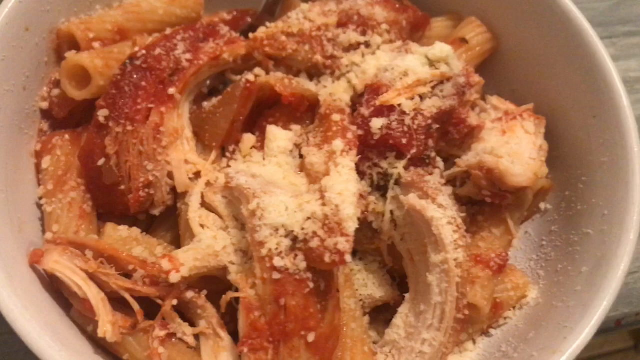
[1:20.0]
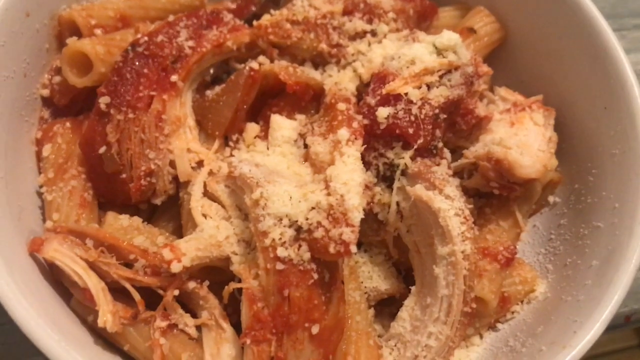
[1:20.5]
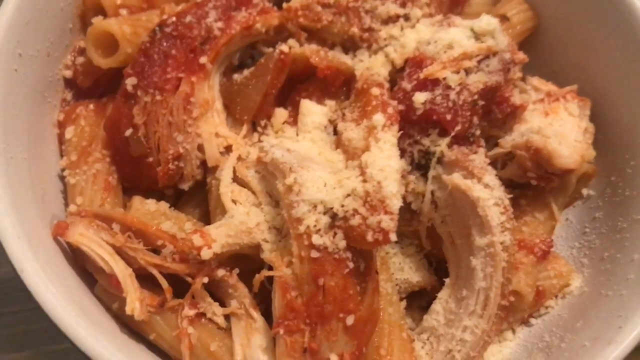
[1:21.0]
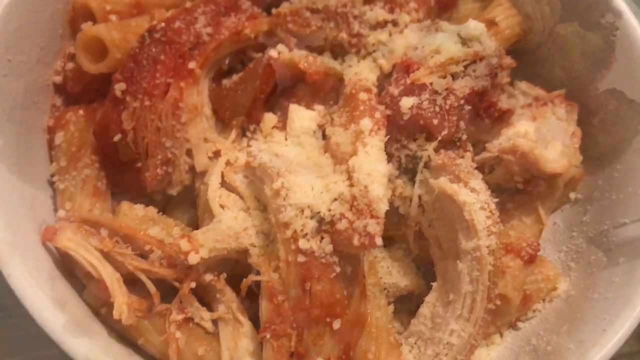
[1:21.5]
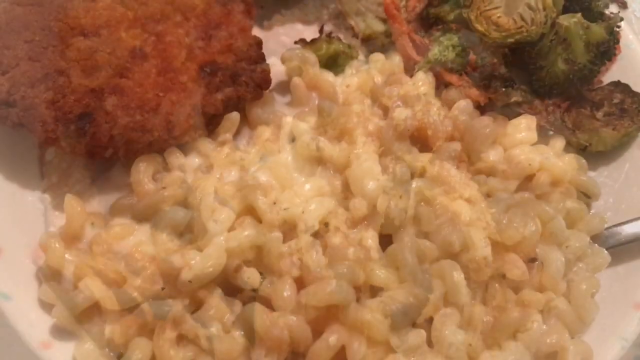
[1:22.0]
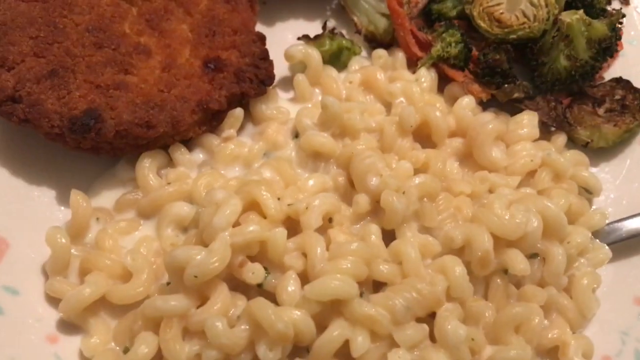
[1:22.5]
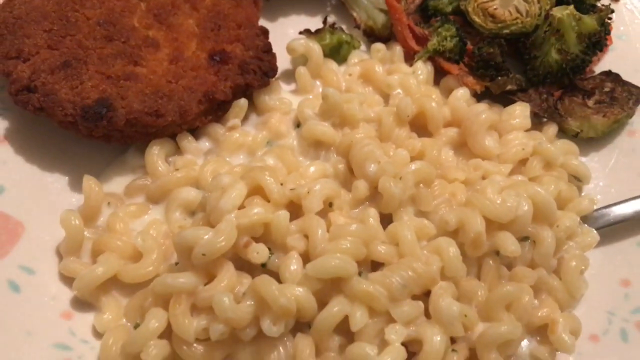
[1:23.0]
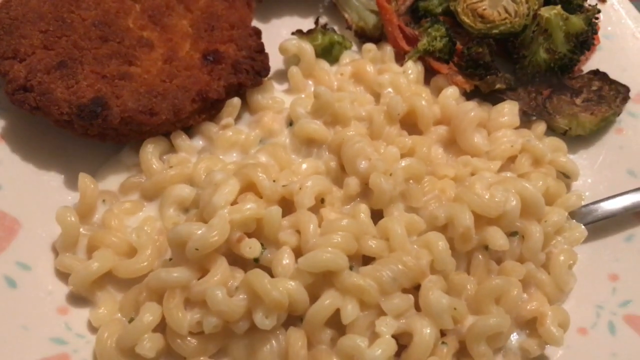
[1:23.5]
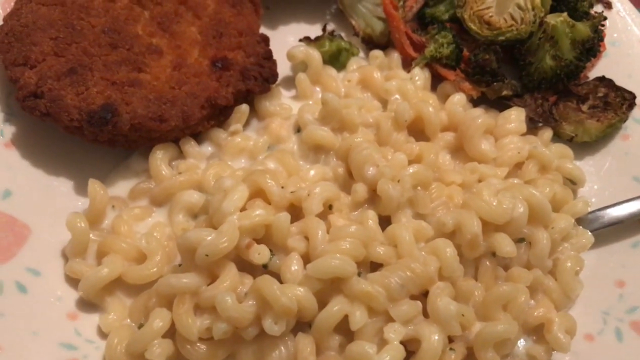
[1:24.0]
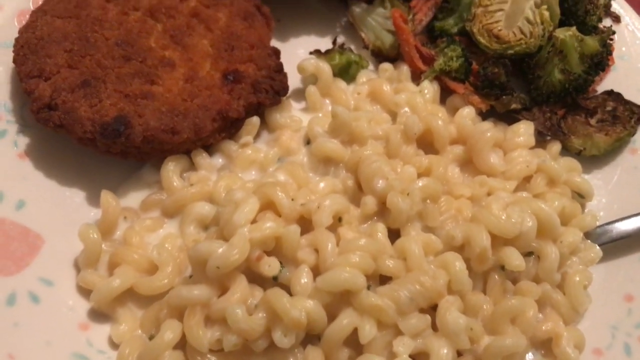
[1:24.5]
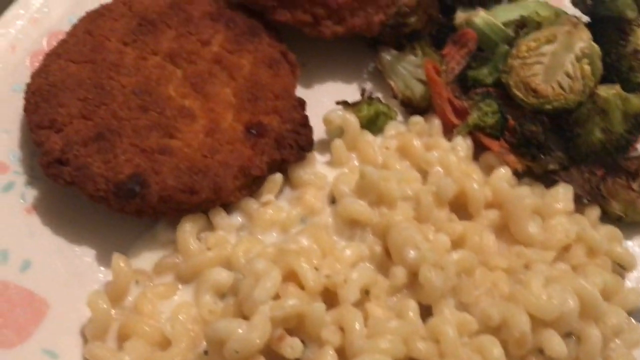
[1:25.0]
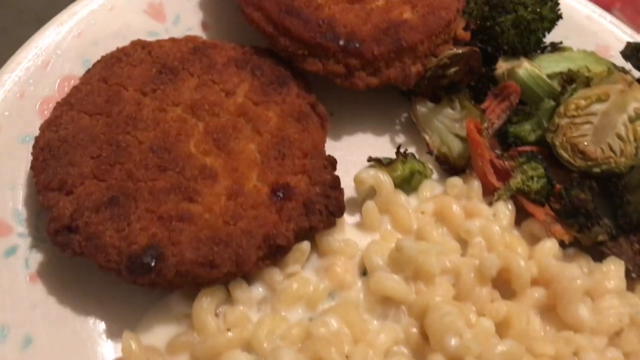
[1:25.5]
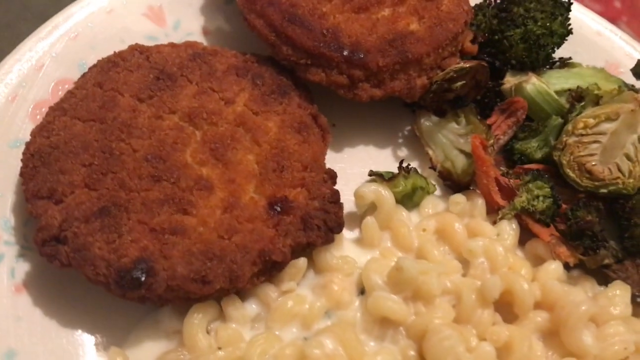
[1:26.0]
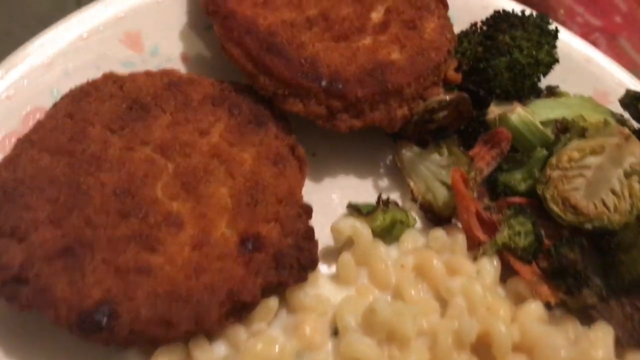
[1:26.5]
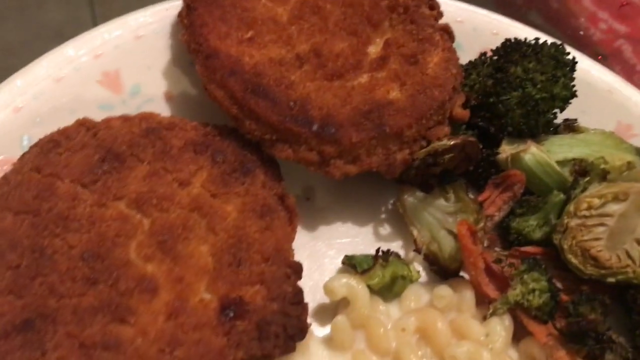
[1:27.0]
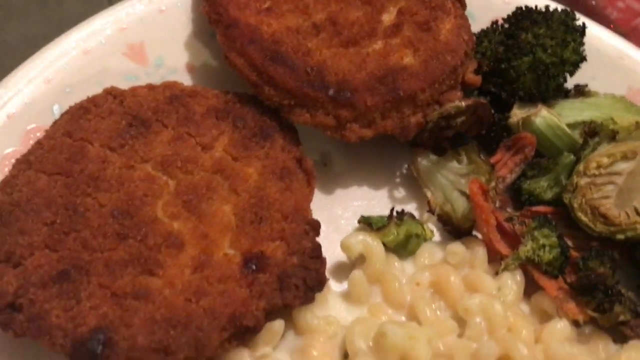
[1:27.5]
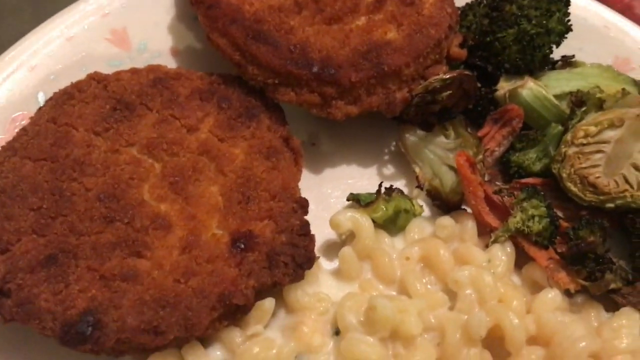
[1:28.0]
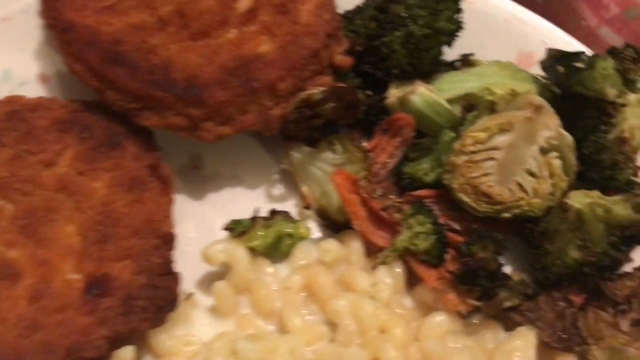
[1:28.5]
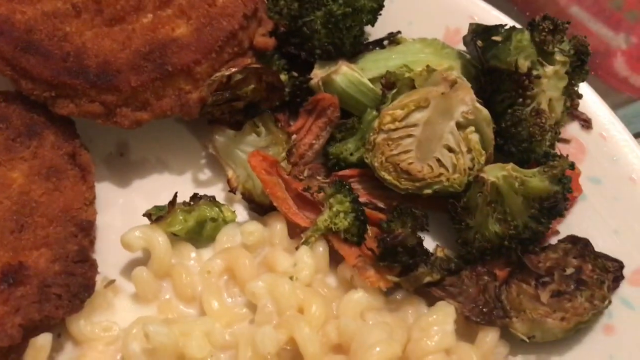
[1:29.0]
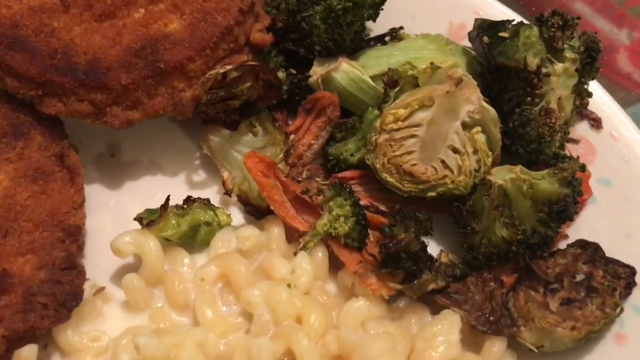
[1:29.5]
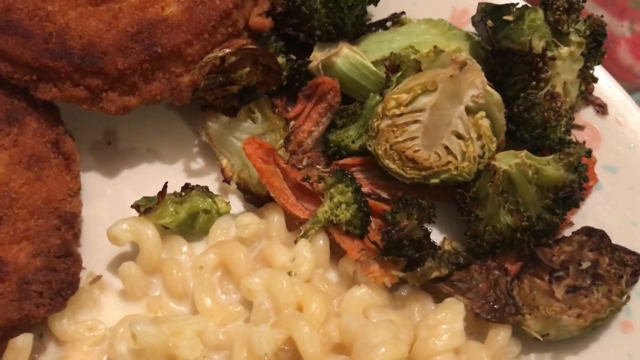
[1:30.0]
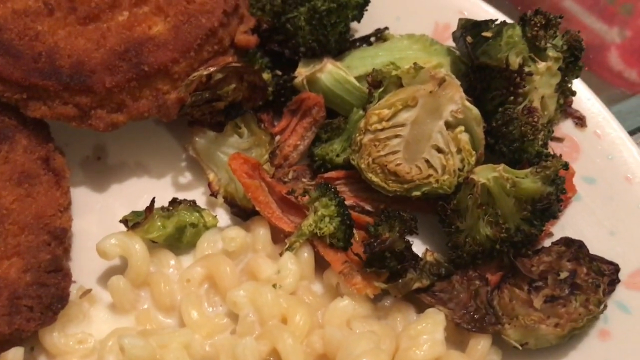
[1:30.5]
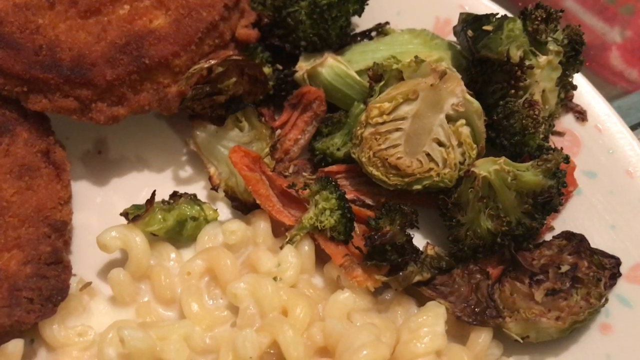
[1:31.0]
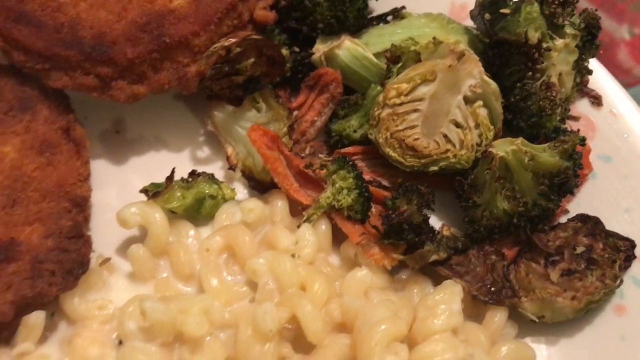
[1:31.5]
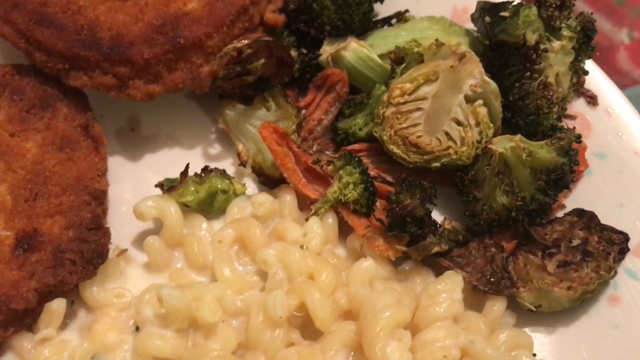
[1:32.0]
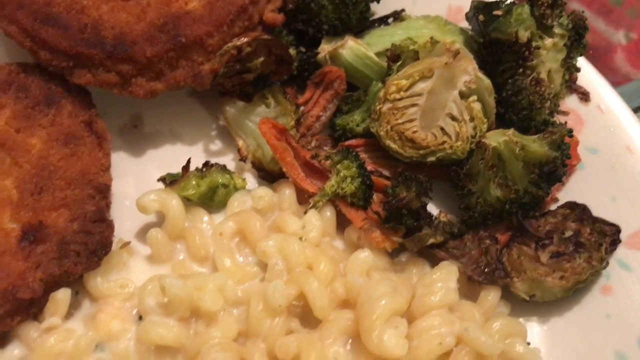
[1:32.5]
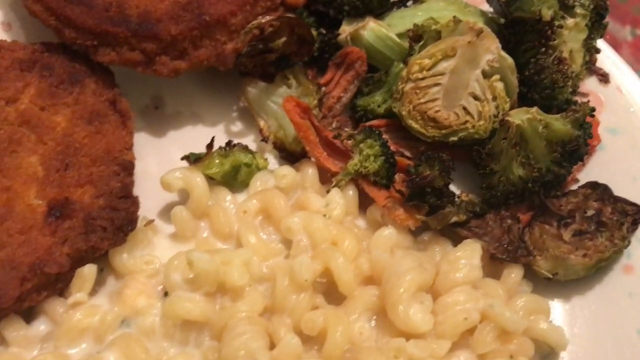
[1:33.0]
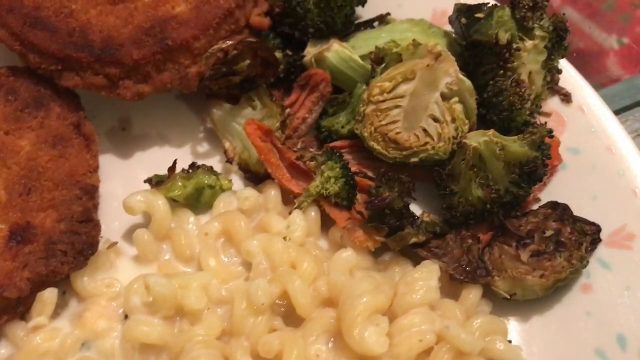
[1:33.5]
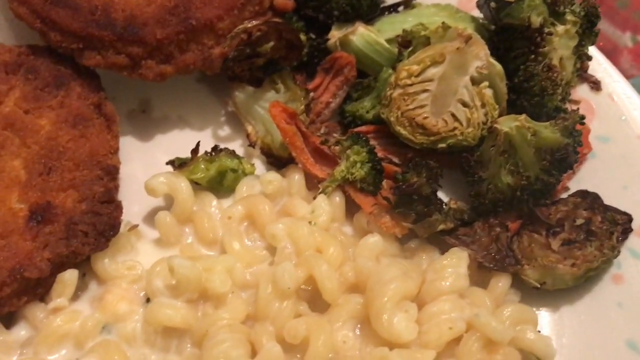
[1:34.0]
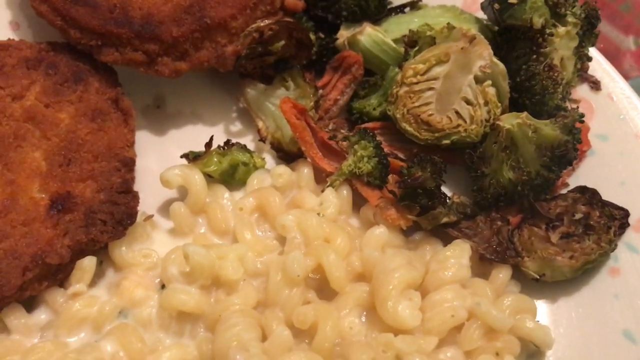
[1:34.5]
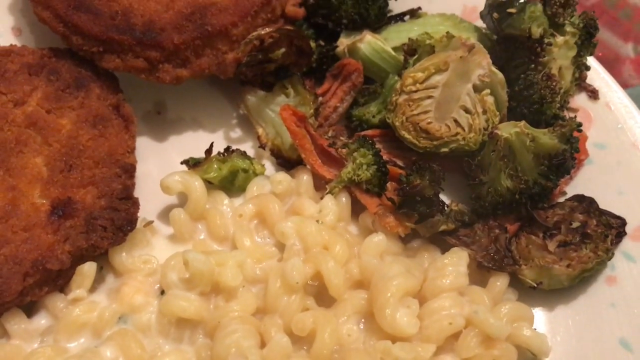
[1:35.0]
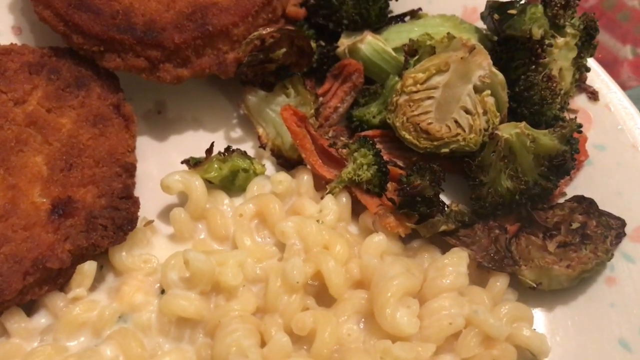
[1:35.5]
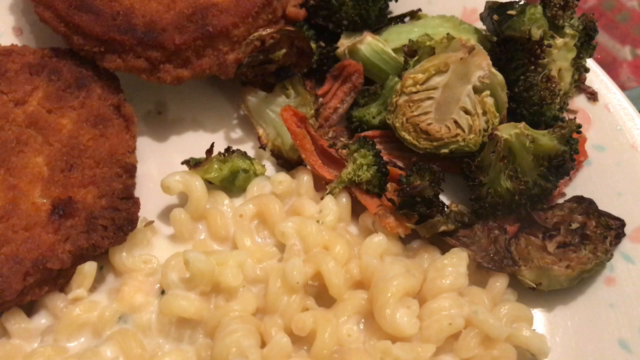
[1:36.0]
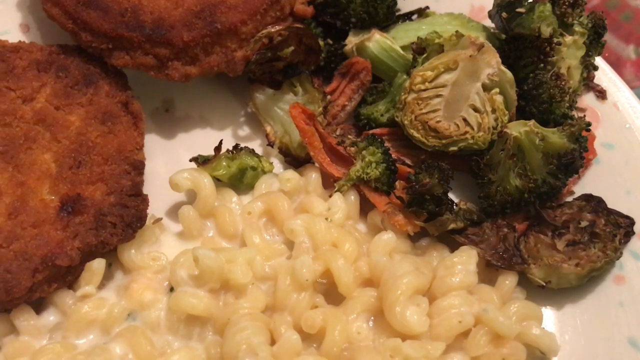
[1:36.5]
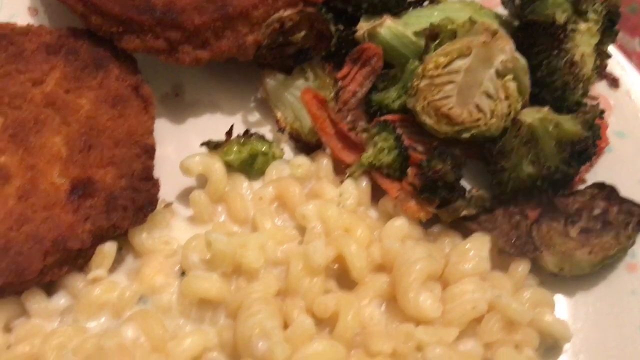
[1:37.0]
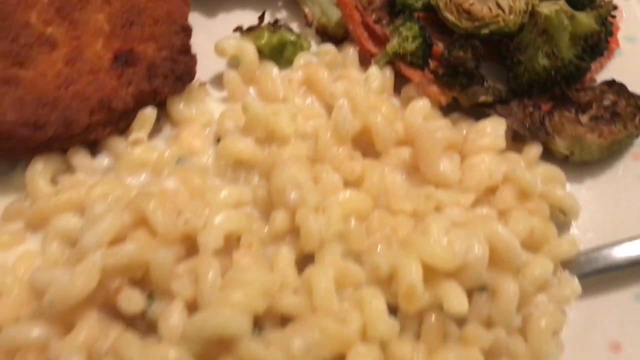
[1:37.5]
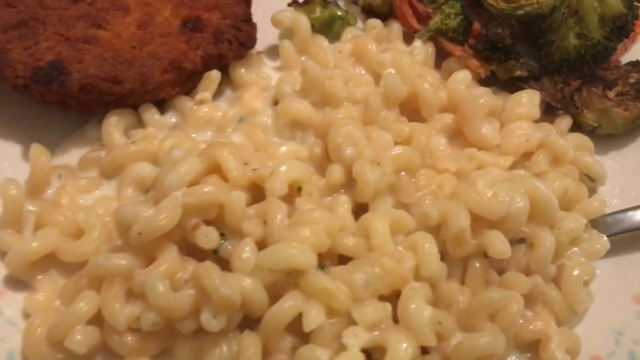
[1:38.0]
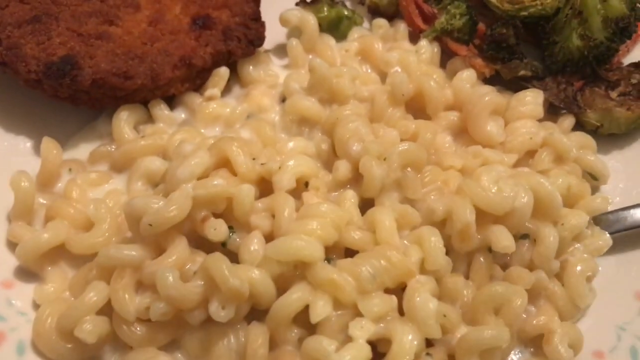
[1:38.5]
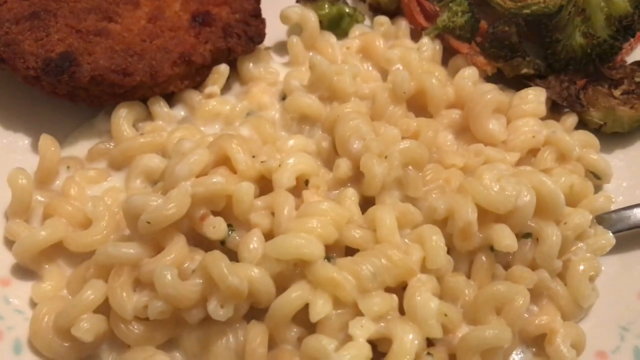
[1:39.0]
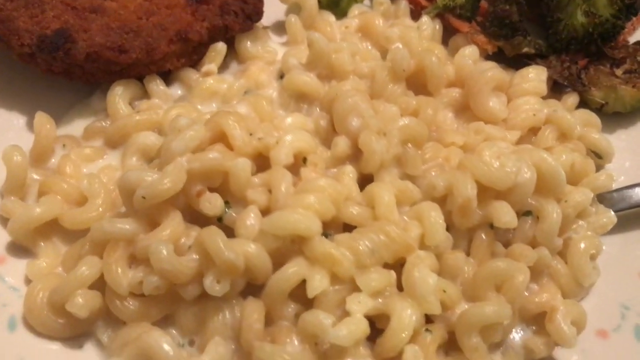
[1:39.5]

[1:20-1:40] The chicken and marinara sauce are showcased with what looks to be parmesan cheese on top. Next is a plate that looks like a dinner. On the bottom of the plate is white cheese macaroni with some sort of white sauce on it. In the top left corner of the plate is what looks to be a crispy chicken patty. On the right side of the plate is a small mound of vegetables that looks to include broccoli, brussels sprouts and carrots. The person pans the camera around the plate, showcasing the different items of food. The macaroni apparently takes up about three quarters of the plate, while the mound of vegetables is significantly smaller, apparently only a quarter of the plate, with the chicken and macaroni taking up the rest.